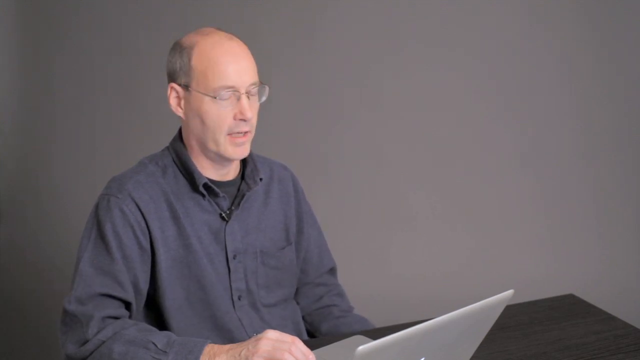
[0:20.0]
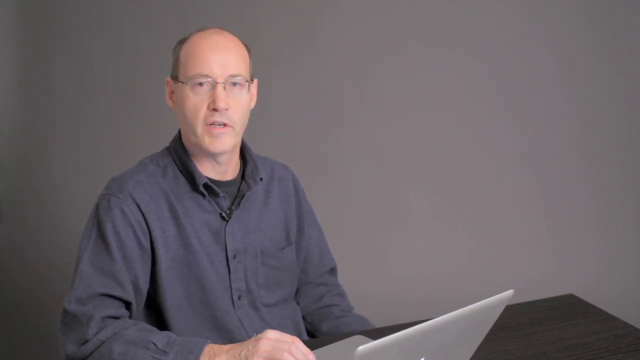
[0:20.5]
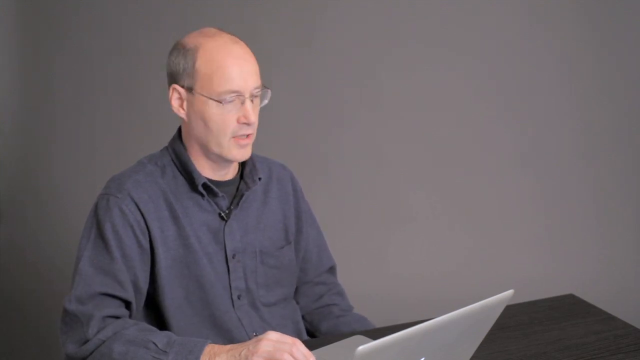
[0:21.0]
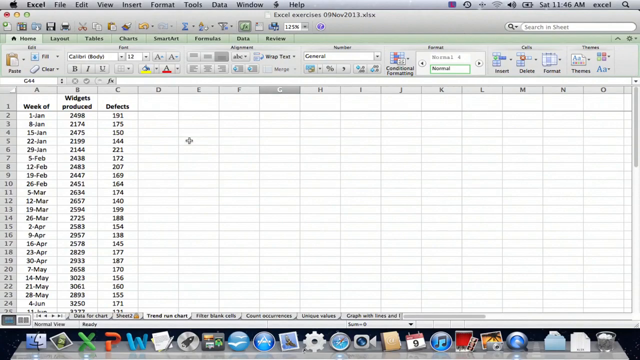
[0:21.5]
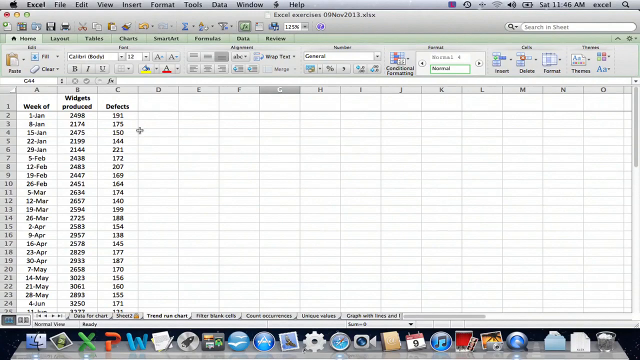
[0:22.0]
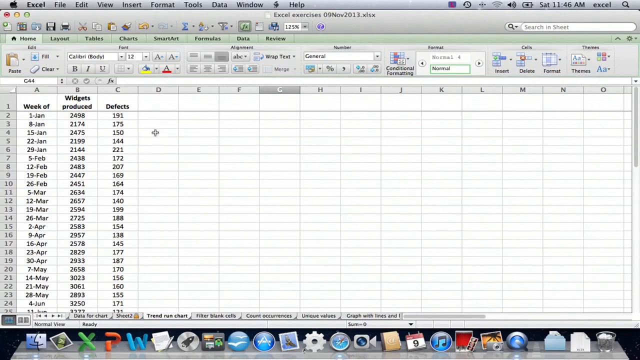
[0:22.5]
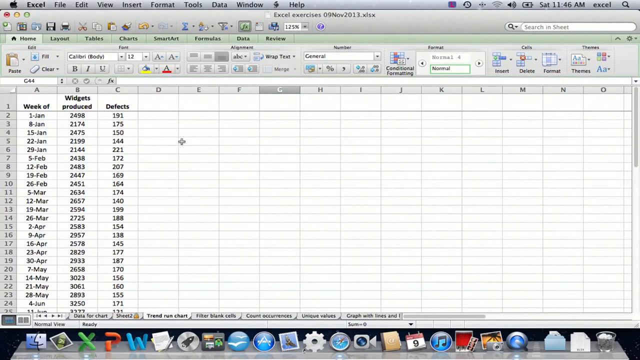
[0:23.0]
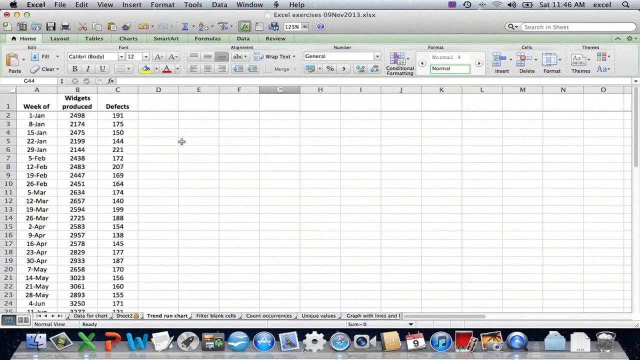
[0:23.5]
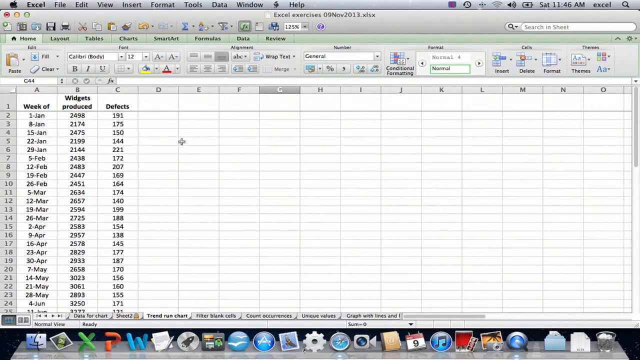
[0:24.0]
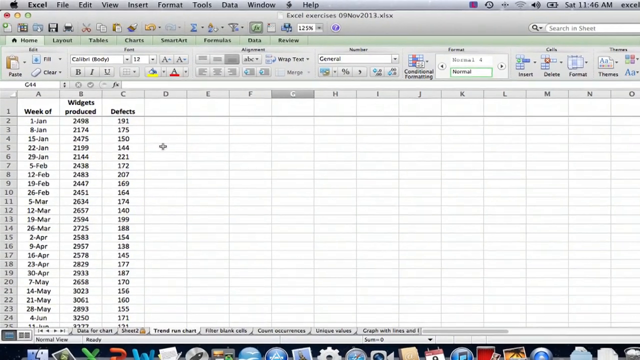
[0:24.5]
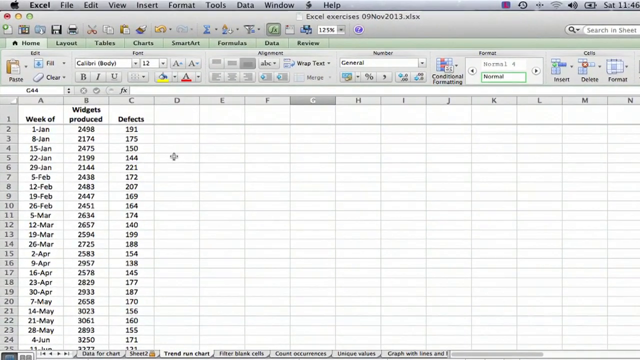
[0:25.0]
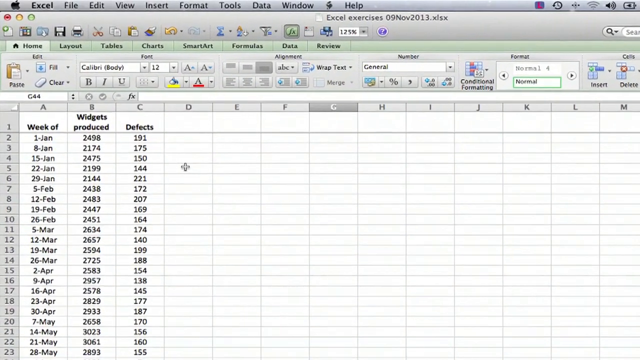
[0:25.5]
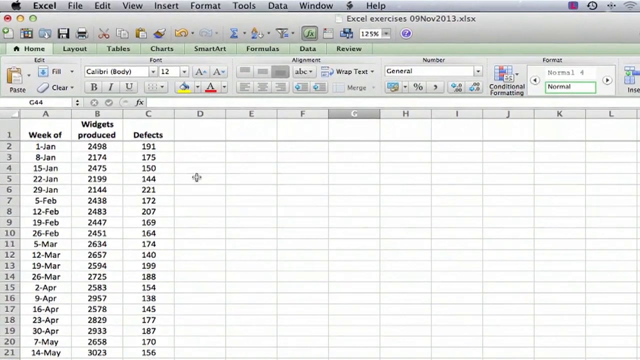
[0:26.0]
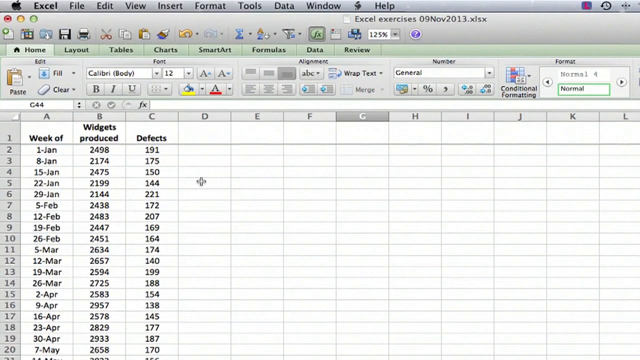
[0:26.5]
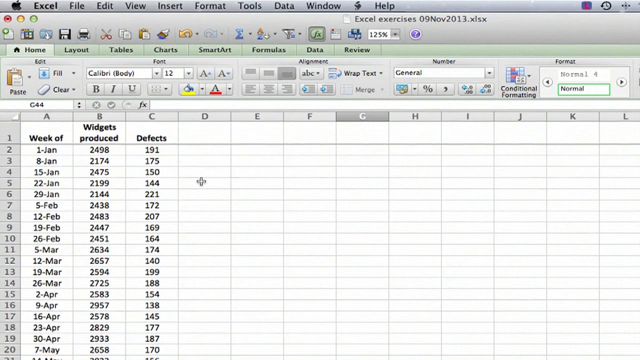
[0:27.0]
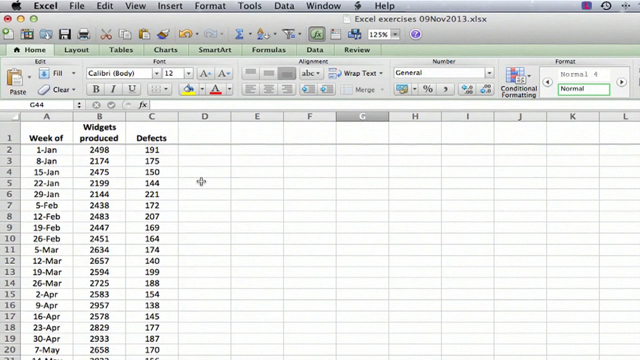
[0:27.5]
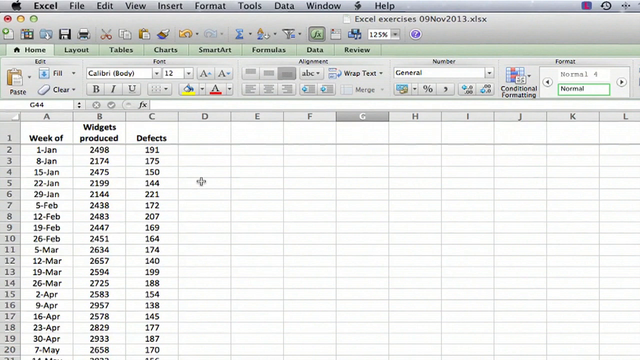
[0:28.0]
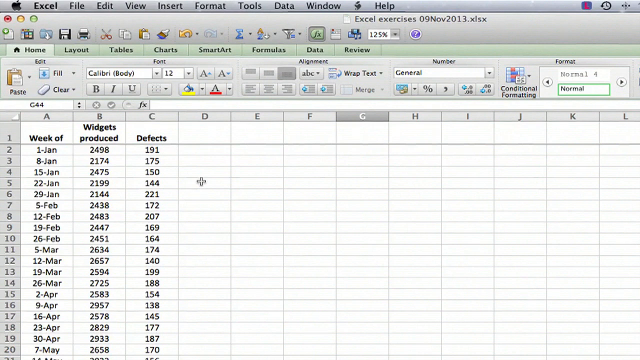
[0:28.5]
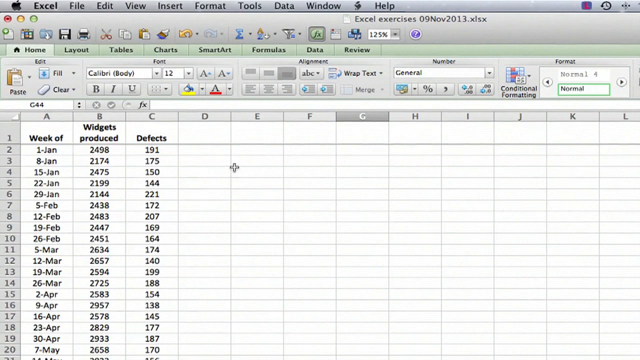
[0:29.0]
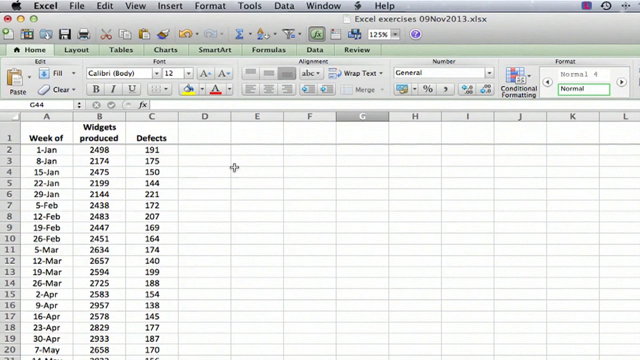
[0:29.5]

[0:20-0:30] Ted Russell is speaking, looking at the user and then back at his laptop. The video then focuses on the Excel document, which has numerous tabs at the bottom and three columns of data: week of, widgets produced and defects. The view zooms in on the Excel options, showing the Home tab with the Edit, Font, Alignment, Number and Format sections. The video then pans back to Ted Russell, who is looking down at his laptop.